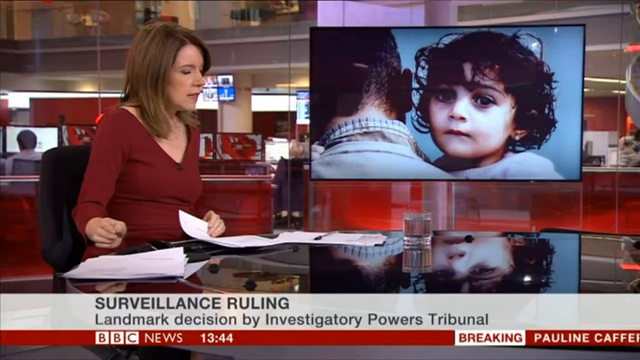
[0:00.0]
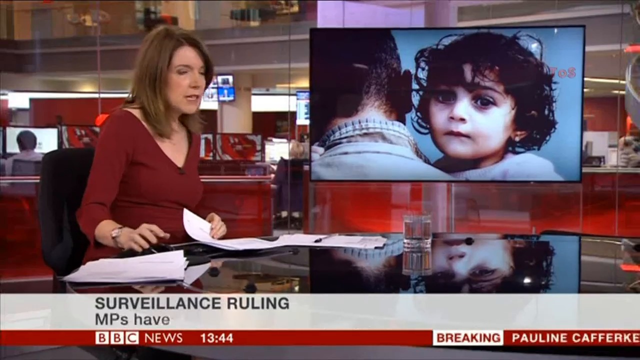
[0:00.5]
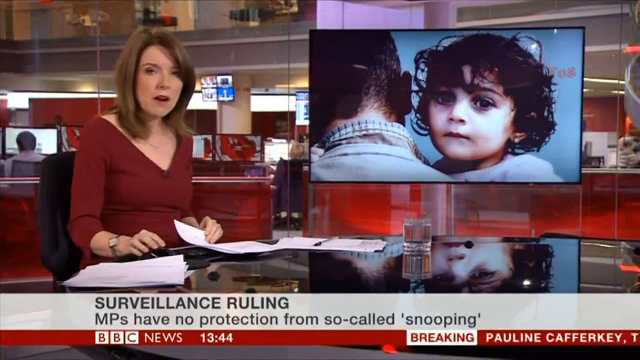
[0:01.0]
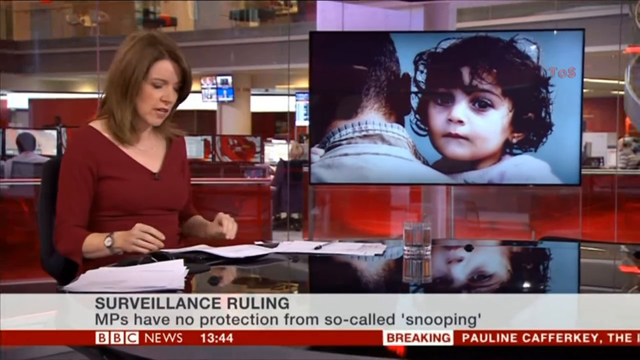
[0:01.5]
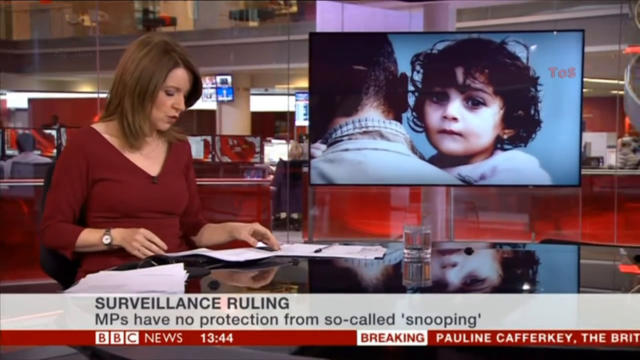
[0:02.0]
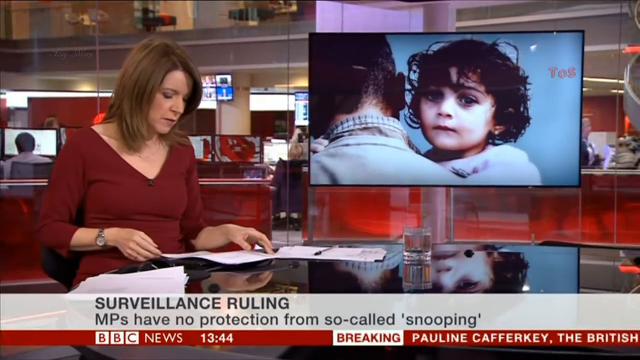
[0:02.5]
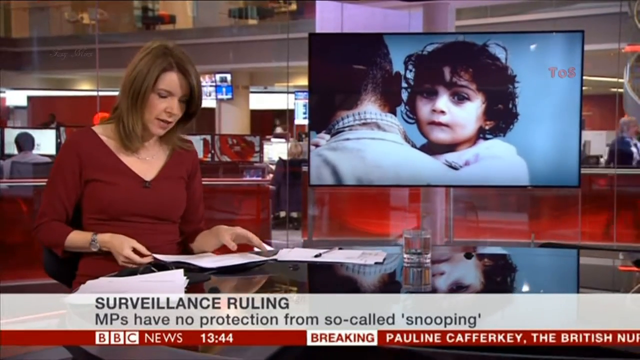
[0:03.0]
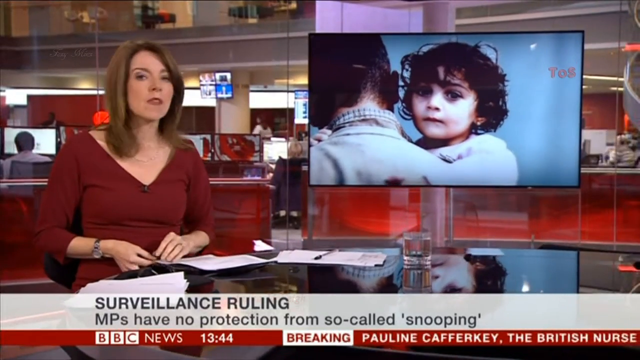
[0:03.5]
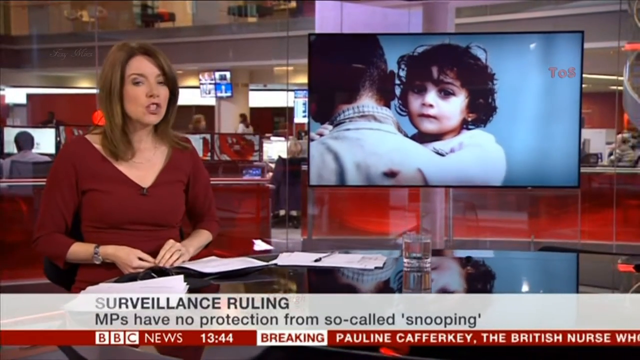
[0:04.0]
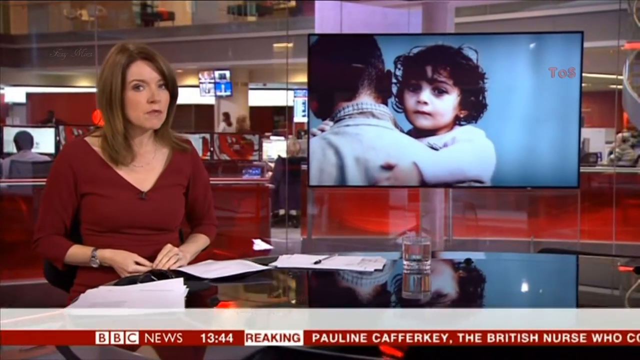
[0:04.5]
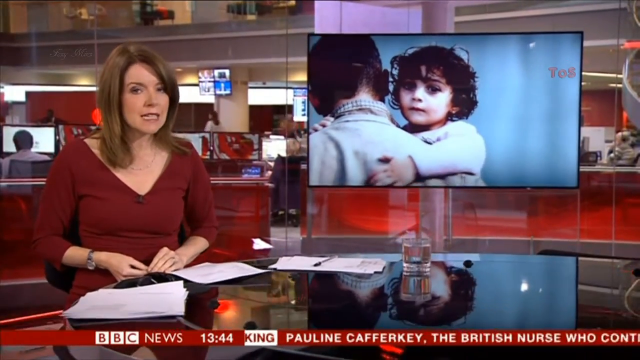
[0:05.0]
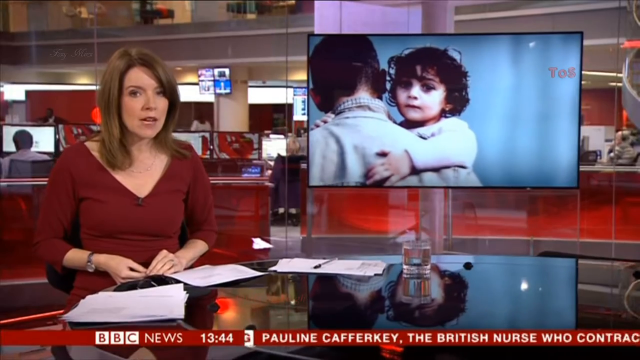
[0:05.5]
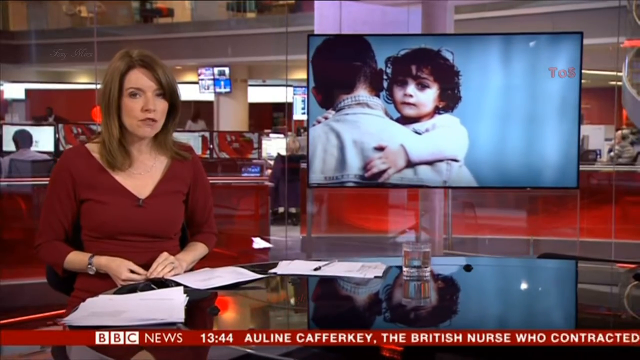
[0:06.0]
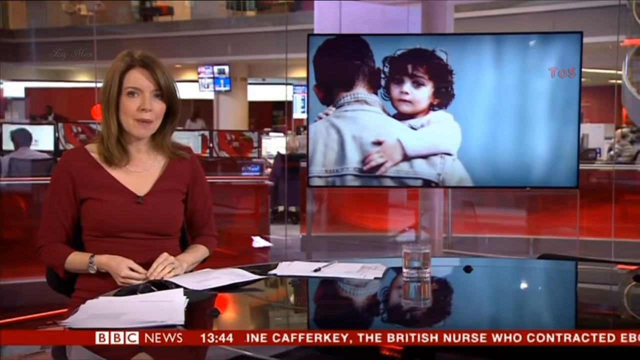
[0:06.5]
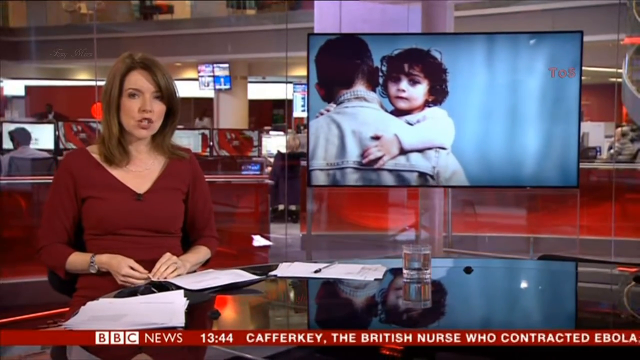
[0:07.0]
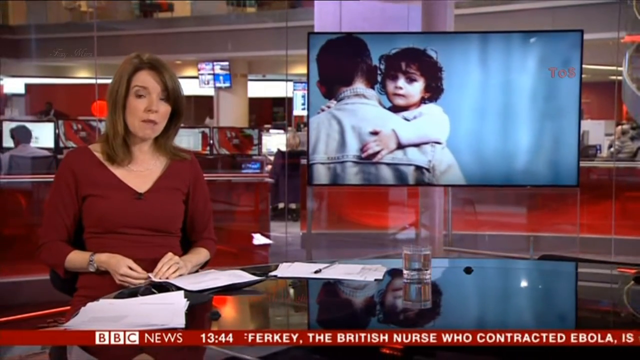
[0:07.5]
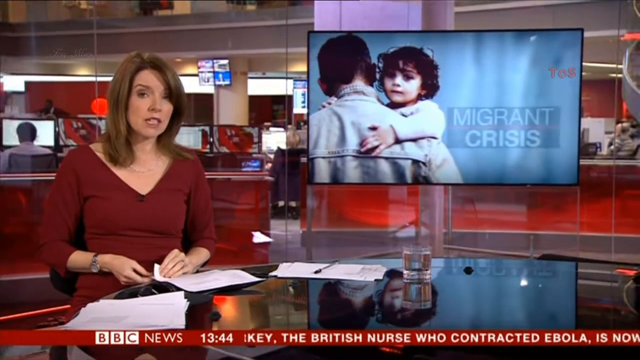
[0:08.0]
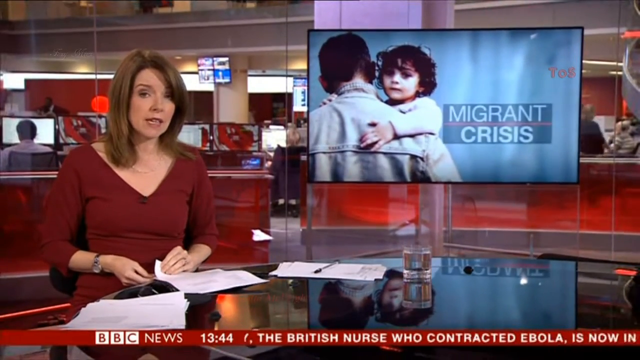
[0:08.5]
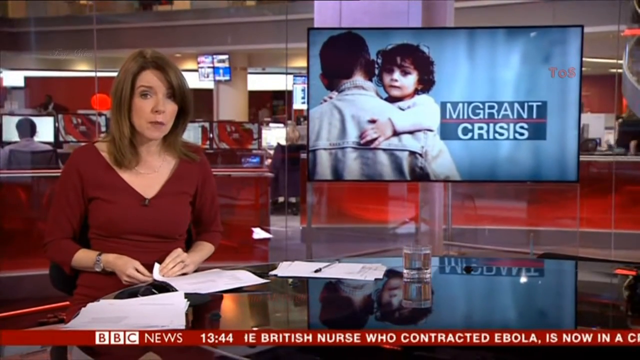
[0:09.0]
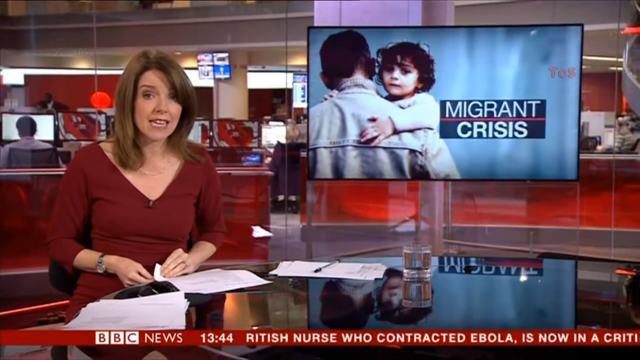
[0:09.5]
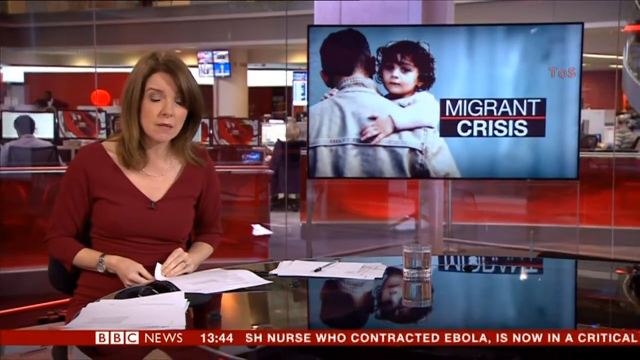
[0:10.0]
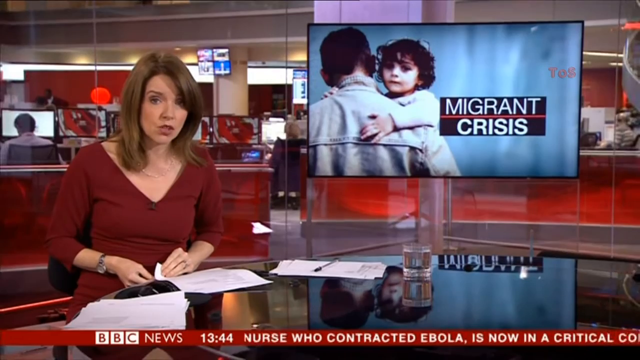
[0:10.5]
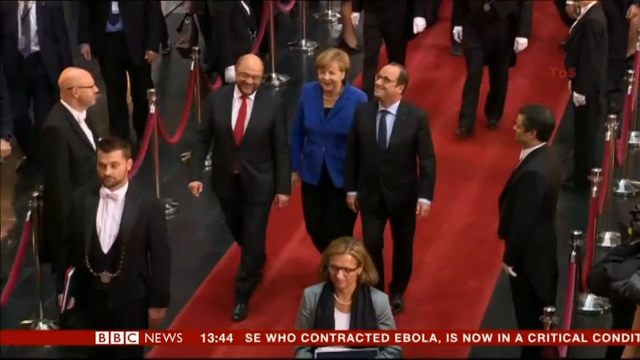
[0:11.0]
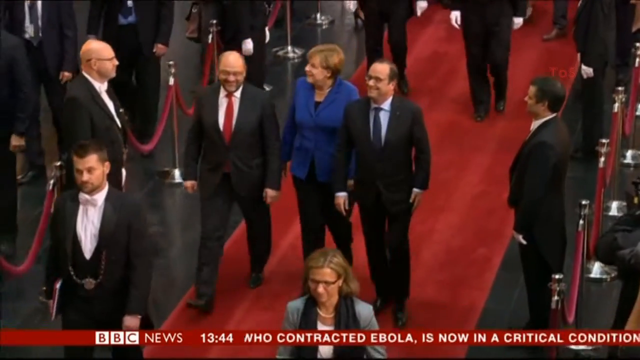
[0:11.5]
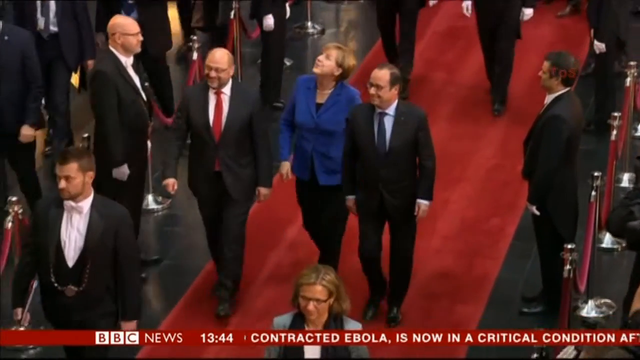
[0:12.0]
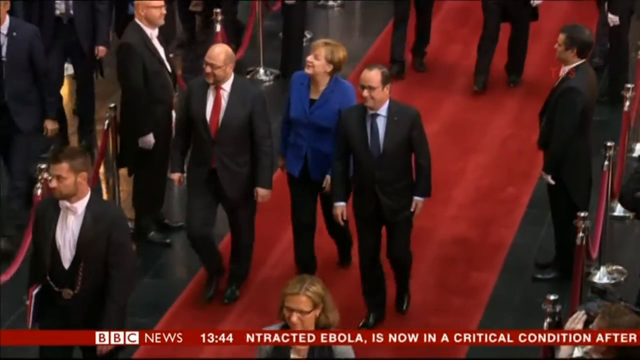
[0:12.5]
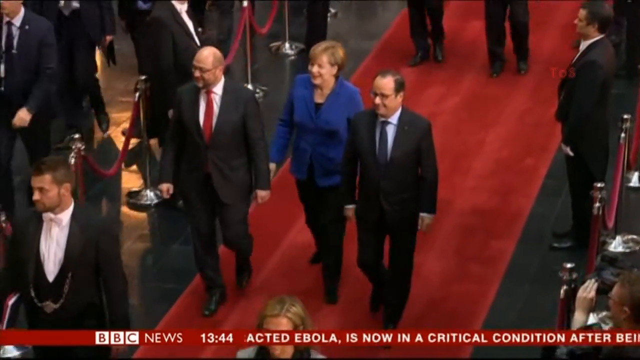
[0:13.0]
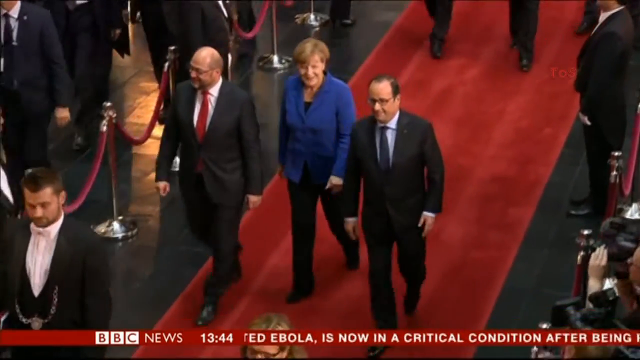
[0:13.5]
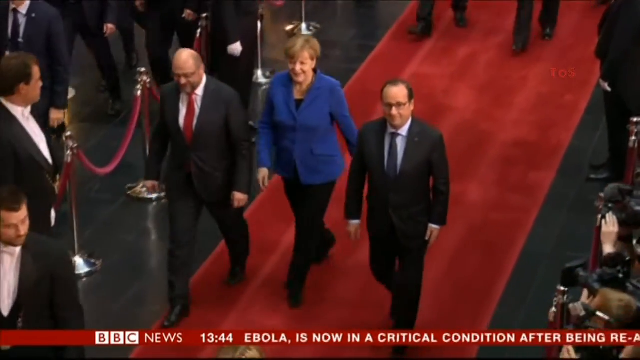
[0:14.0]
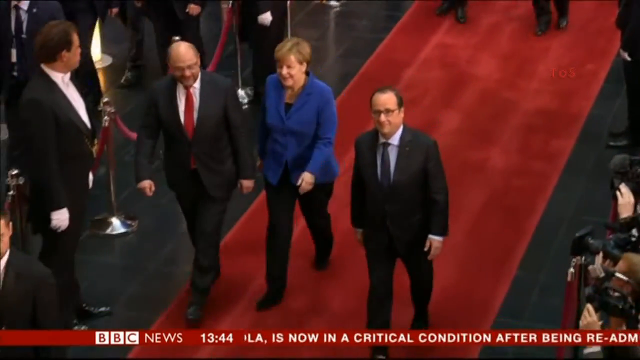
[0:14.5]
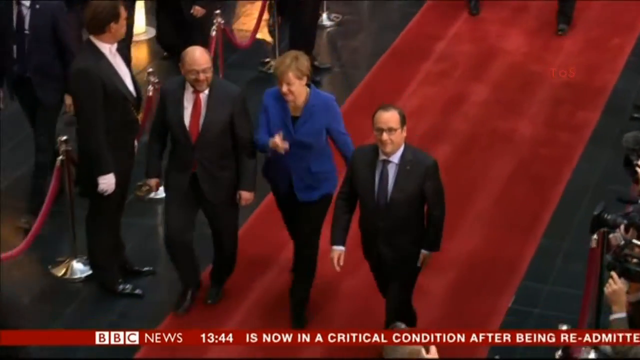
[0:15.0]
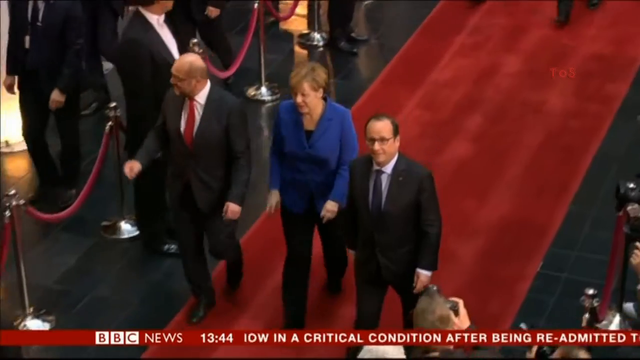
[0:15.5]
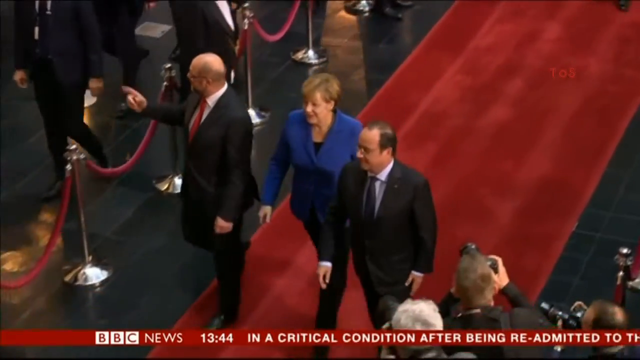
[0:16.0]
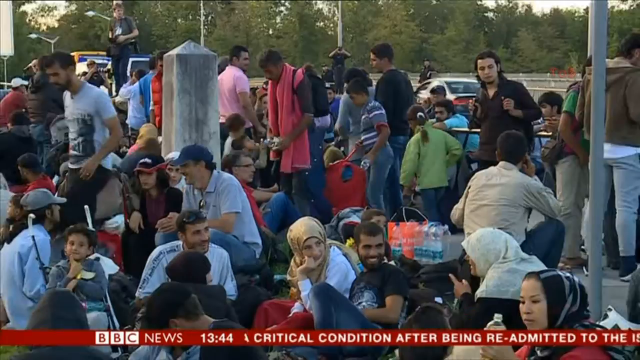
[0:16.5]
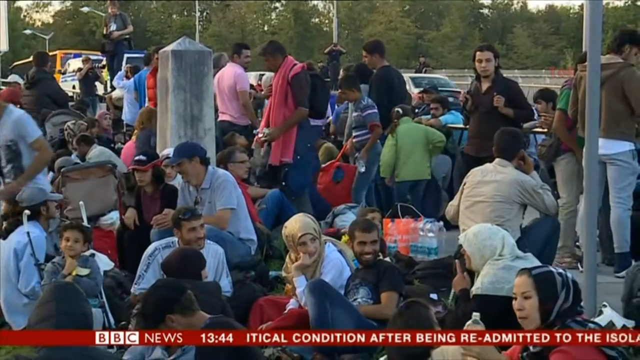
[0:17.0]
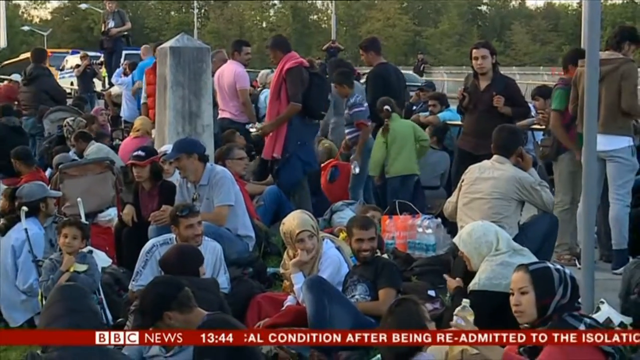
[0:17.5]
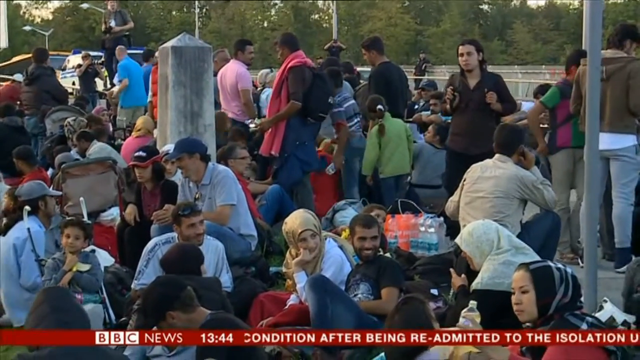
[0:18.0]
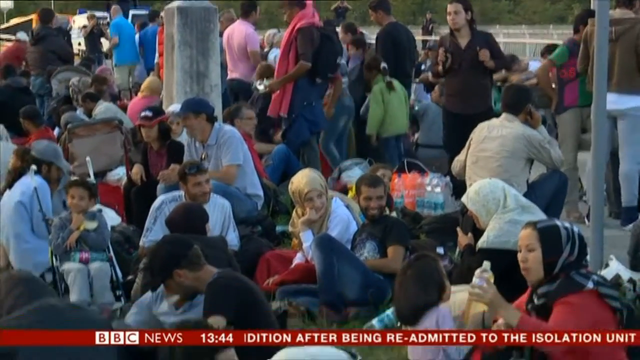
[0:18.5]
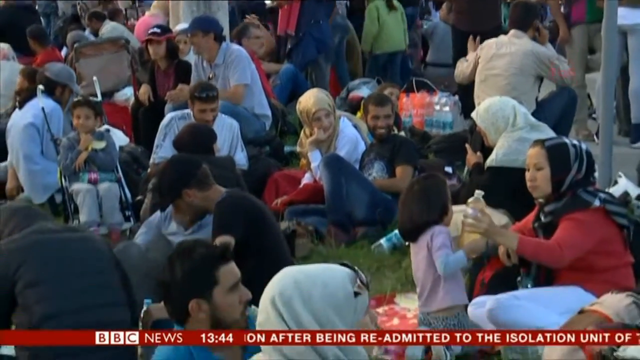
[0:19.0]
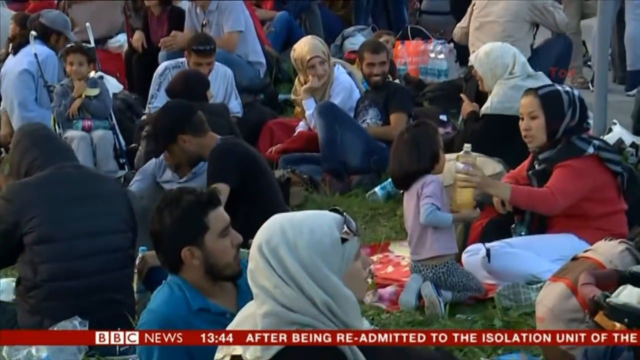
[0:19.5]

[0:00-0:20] The video opens in what seems to be a newsroom. A woman sits at a desk on the left in a black chair; she wears what appears to be an open top with long sleeves, her hair falls a little past her shoulders, and she looks to be in her early forties. A monitor is up showing a picture of a person holding a little girl. Text down below reads "surveillance ruling, MPs have no protection from so-called snooping" along with "BBC News", and then it disappears. Other information streams across the bottom of the screen, apparently about various situations around the world. A person walks down a runway like a red carpet, escorted by two men. The camera then pans quickly to a crowd of people who look like they are sitting outside at an event or something similar, or who could be refugees of sorts, since they seem to be grouped together.